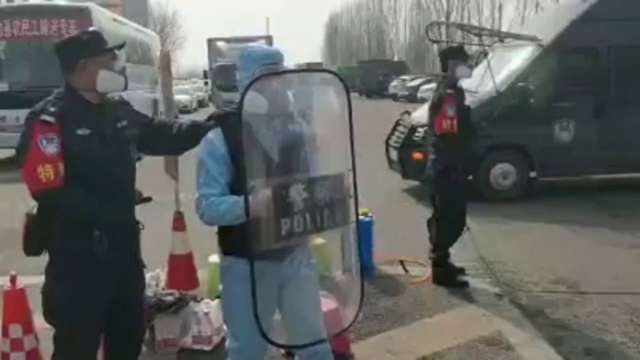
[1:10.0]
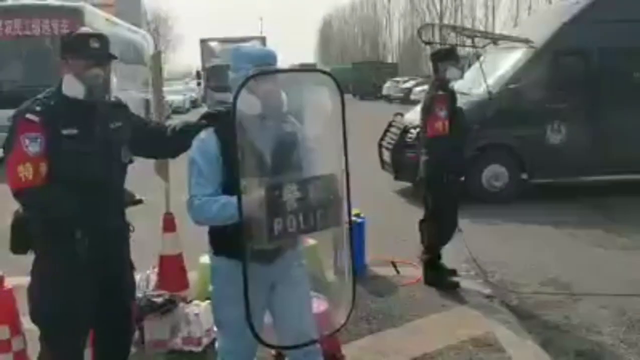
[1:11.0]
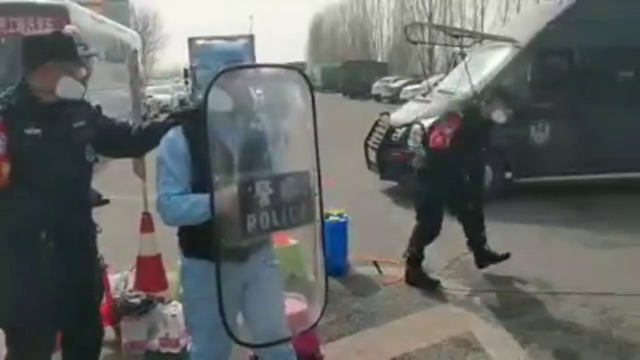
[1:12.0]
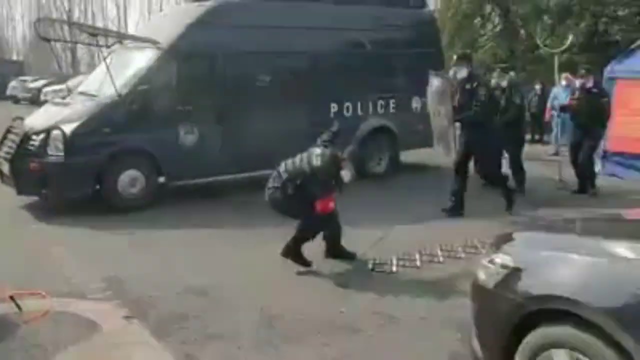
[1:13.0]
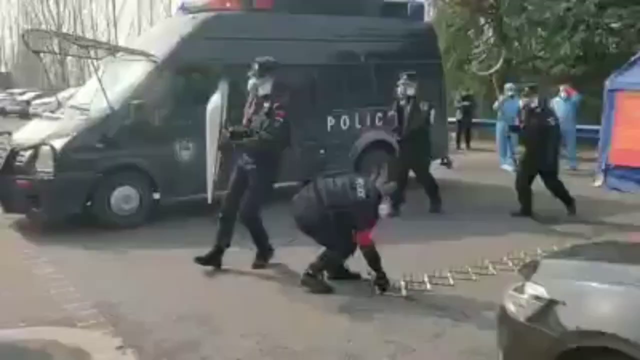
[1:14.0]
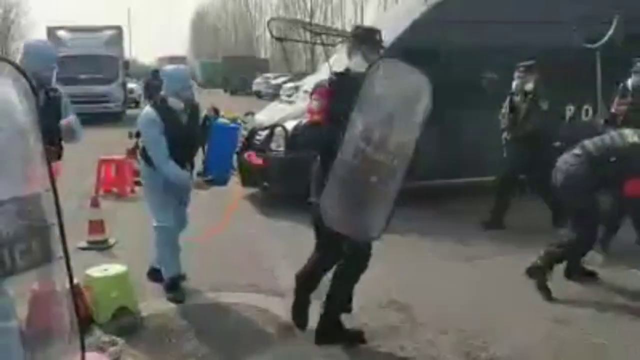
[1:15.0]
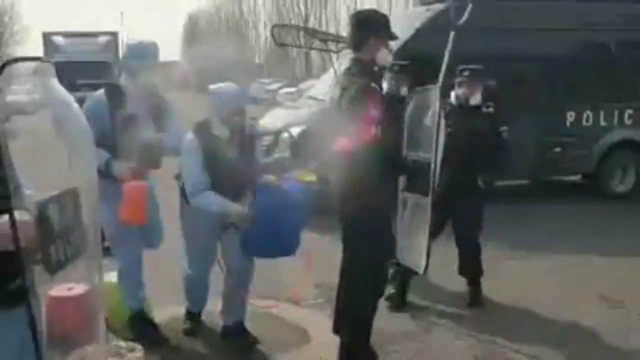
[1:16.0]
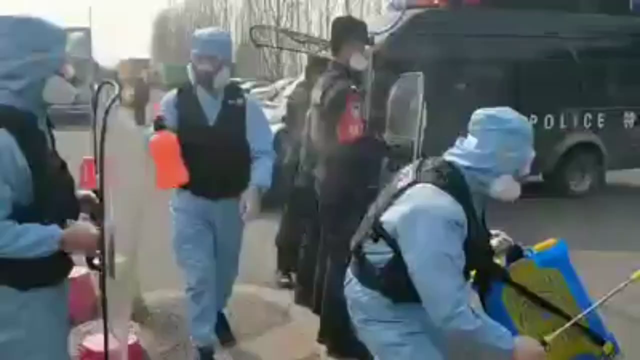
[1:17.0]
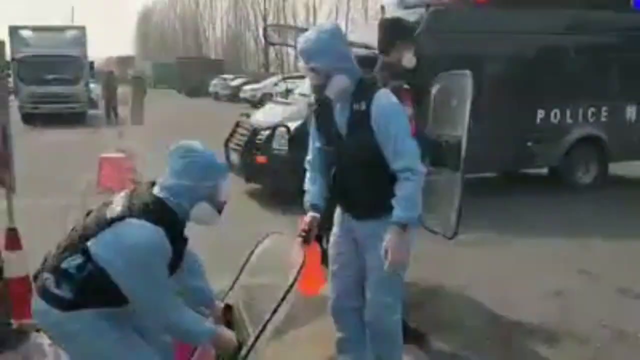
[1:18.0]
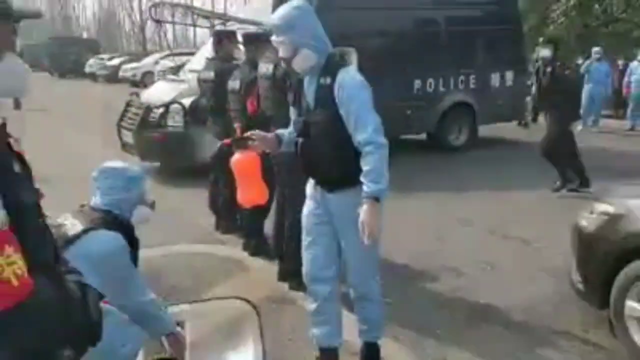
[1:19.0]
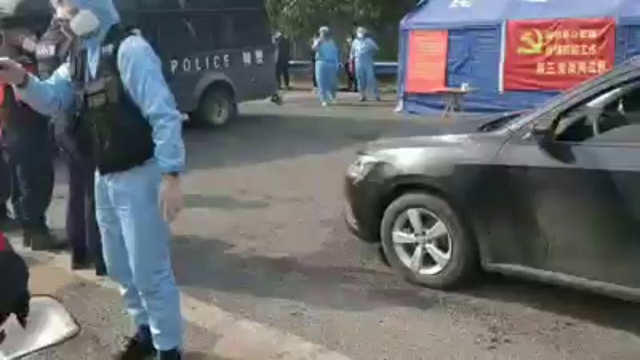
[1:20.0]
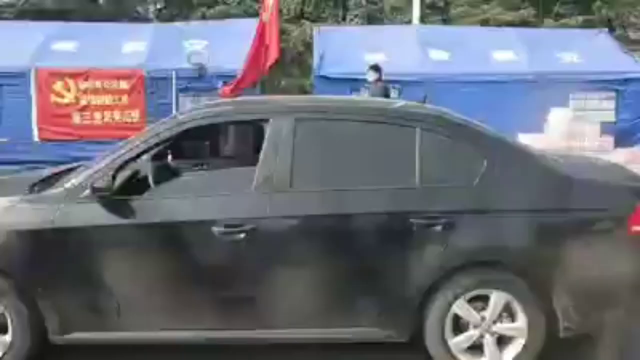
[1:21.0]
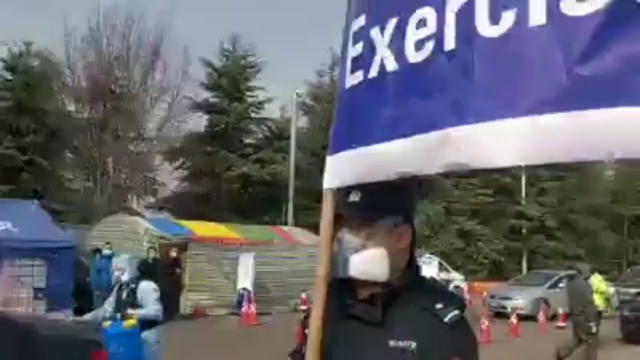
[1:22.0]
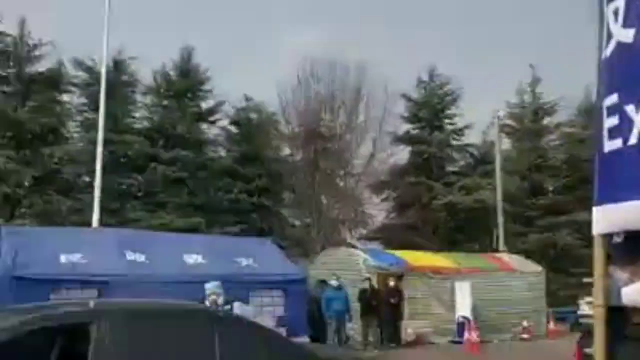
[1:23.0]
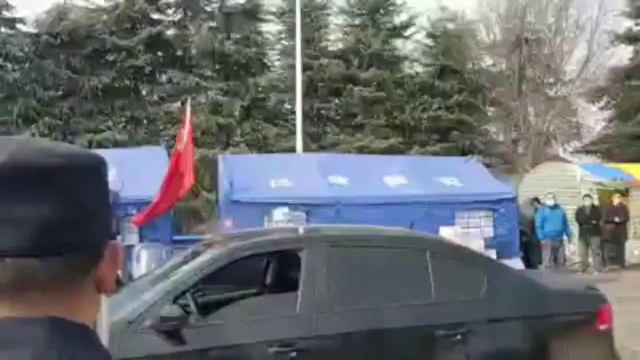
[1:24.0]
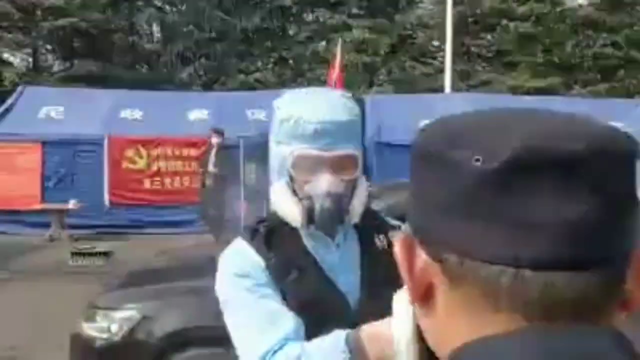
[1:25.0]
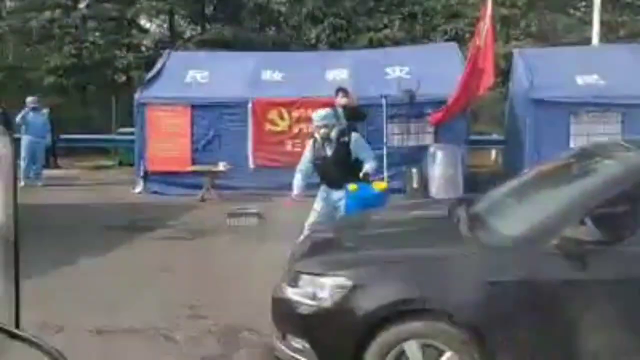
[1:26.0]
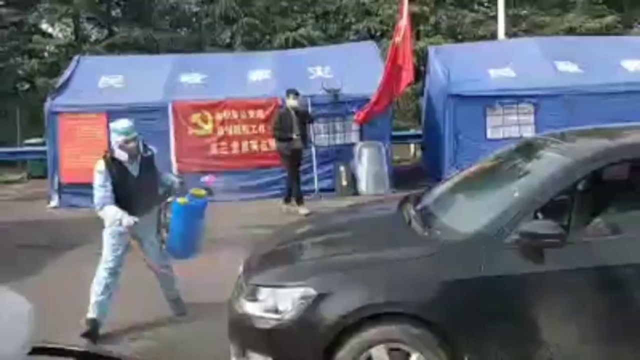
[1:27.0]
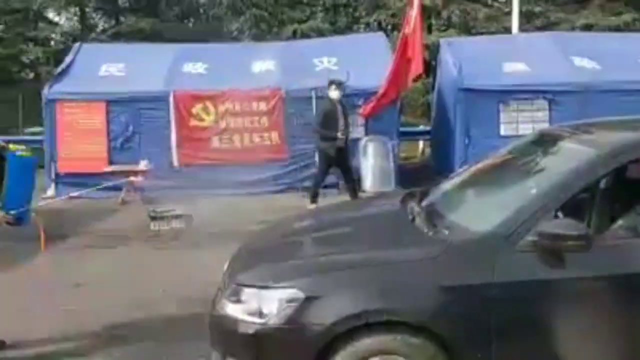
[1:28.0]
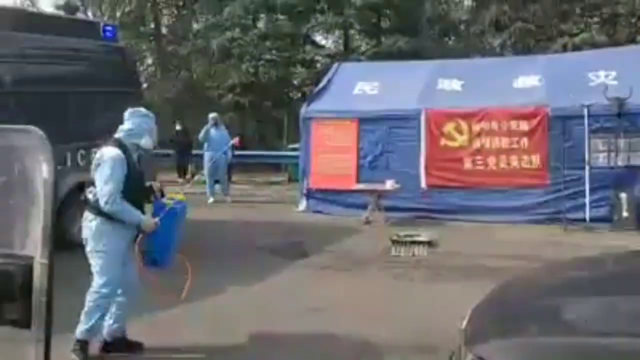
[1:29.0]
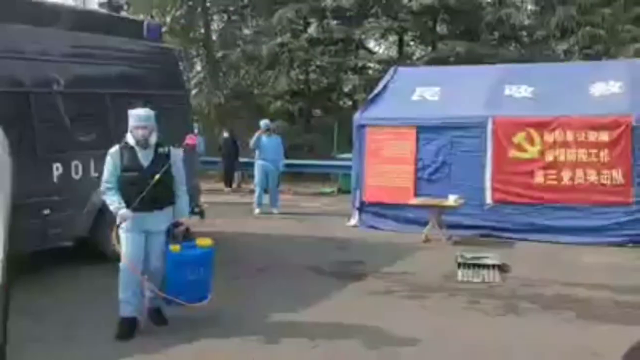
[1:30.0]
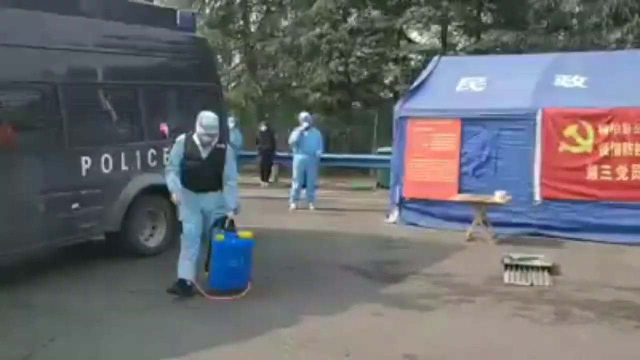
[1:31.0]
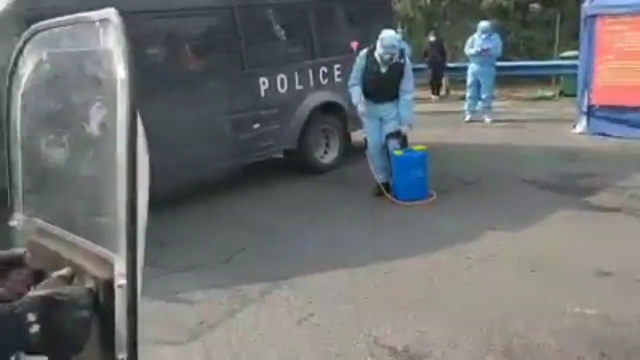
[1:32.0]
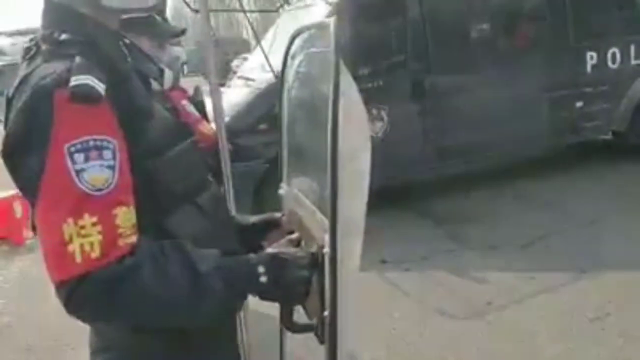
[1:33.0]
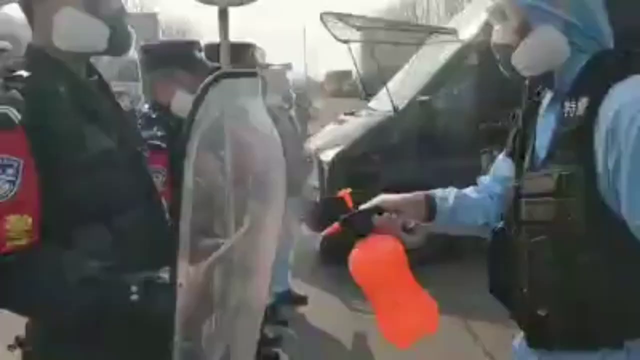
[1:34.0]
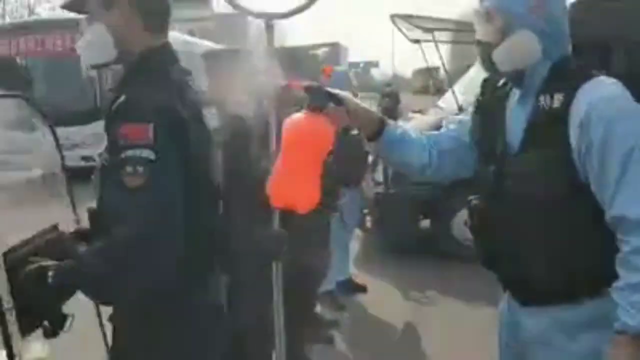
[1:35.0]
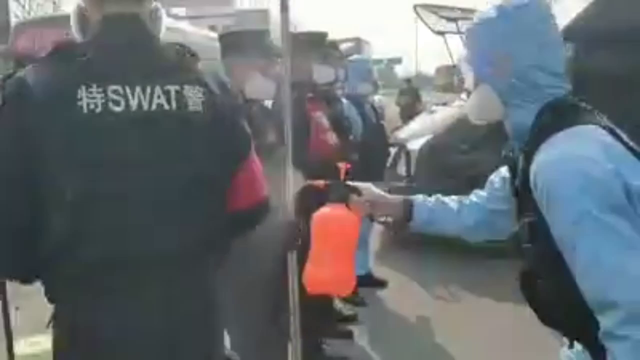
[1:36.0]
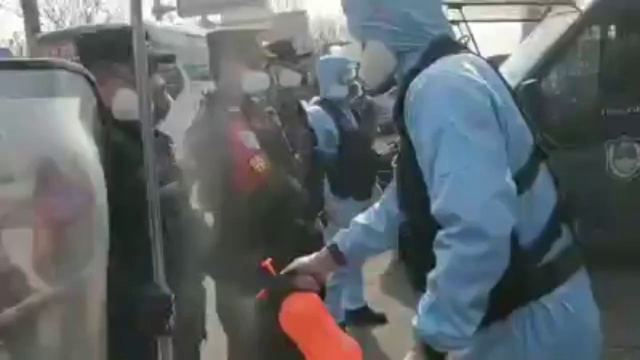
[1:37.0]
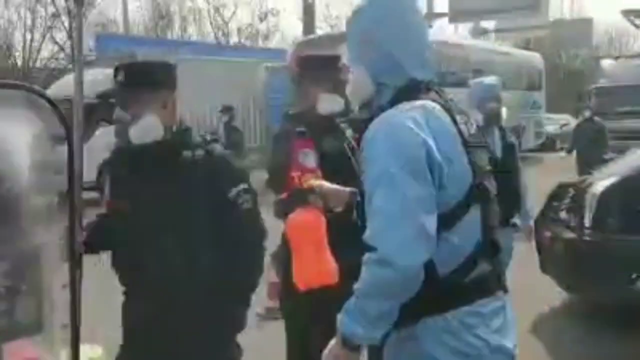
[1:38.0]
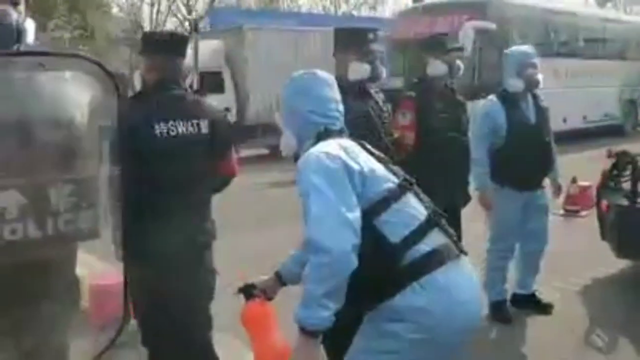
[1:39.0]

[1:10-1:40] Some SWAT members stand around outside. Two of them wear black uniforms with red on the right arm. One wears a full-body blue suit that comes up over the head and a bulletproof vest that says "police"; this one in the blue suit also holds a police shield. They stand next to some trees on a road with a bunch of cars in the background. One of the officers in black runs forward and leans down toward some spiked strips on the ground while other officers run around in the background. Several of them then spray each other with some sort of spray, and one runs around the car spraying. The stopped car is a black VW. The camera pans up to a blue sign that says "exercises" and has some sort of Asian writing on it. On the other side of the car are some blue tents with red flags on them.